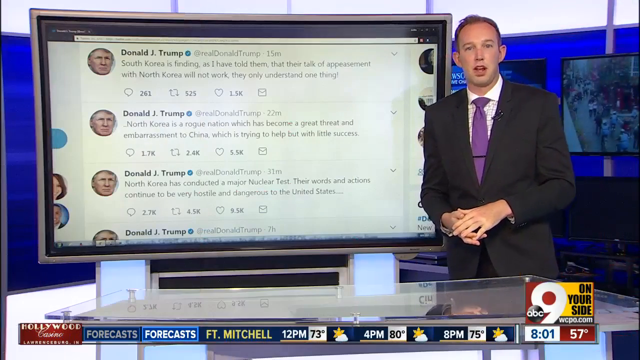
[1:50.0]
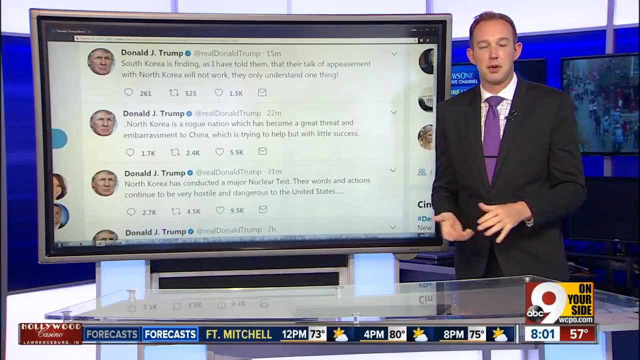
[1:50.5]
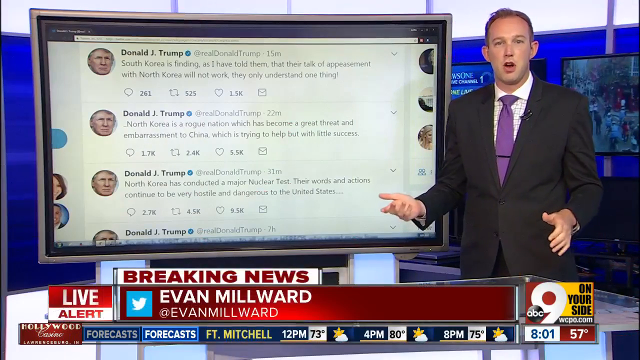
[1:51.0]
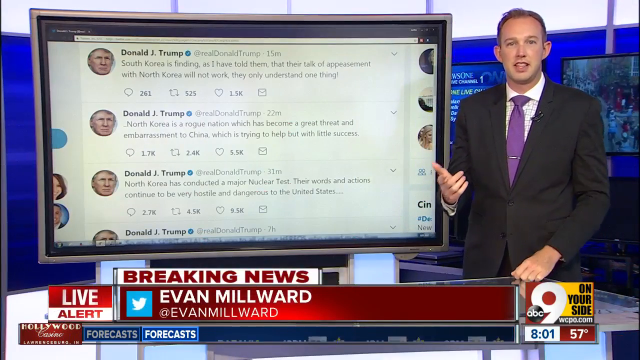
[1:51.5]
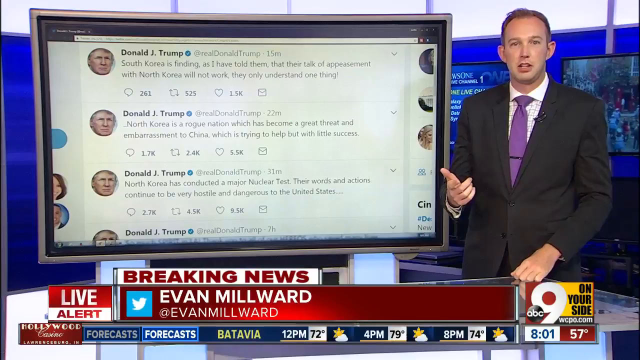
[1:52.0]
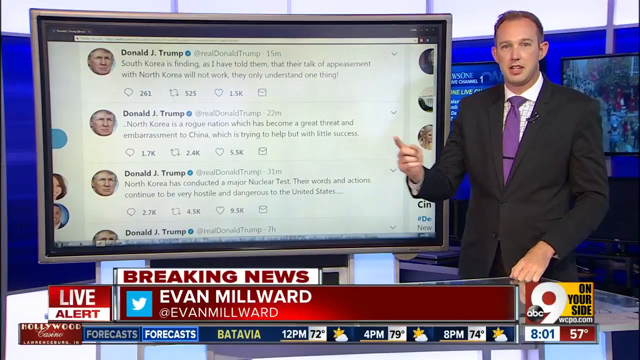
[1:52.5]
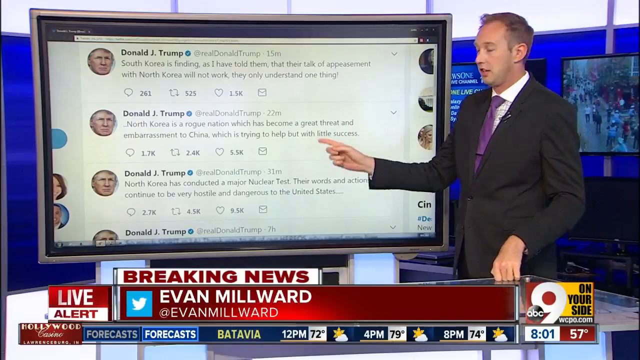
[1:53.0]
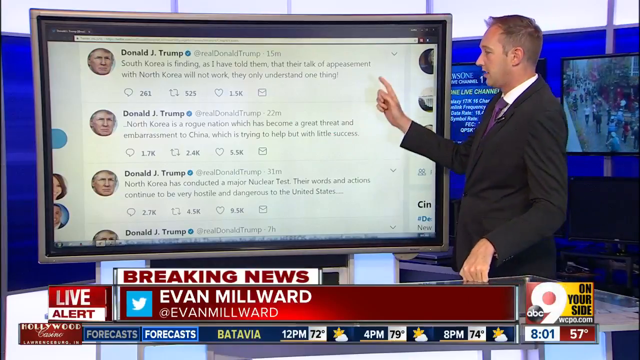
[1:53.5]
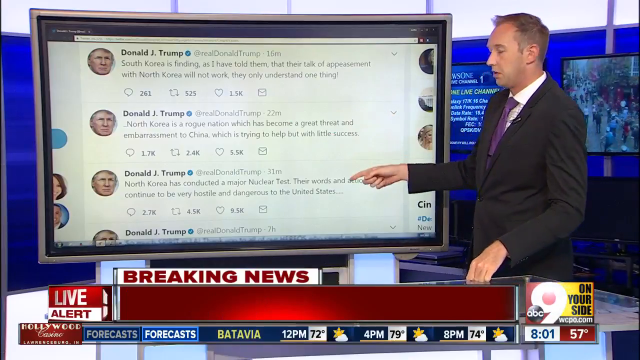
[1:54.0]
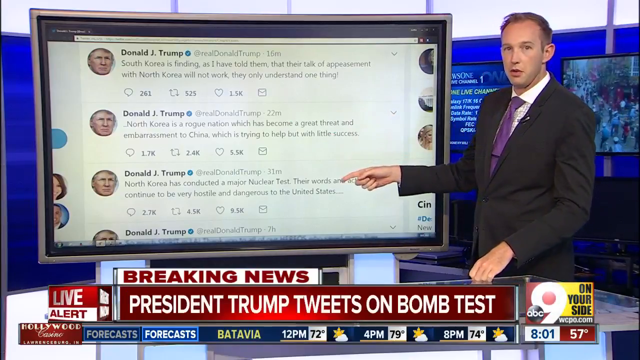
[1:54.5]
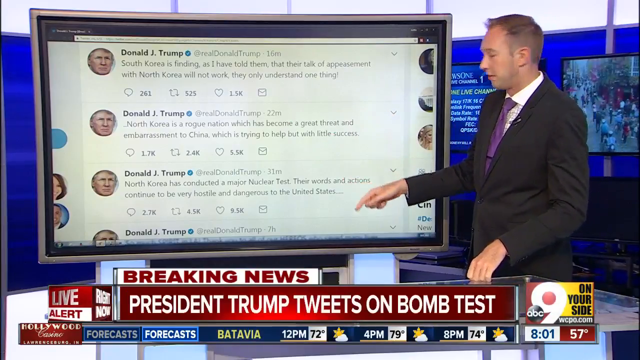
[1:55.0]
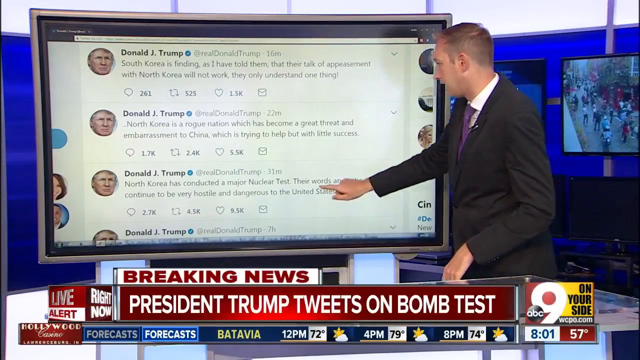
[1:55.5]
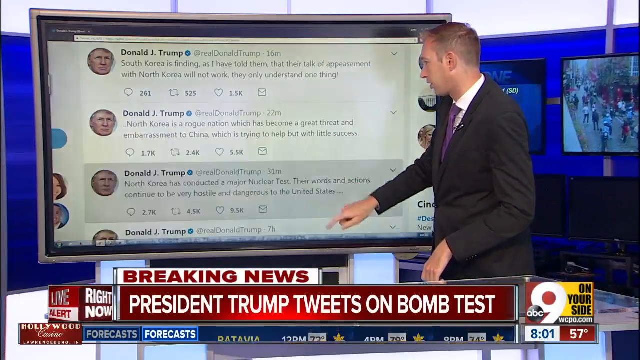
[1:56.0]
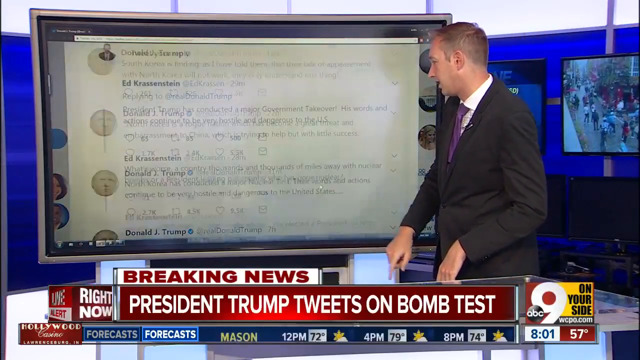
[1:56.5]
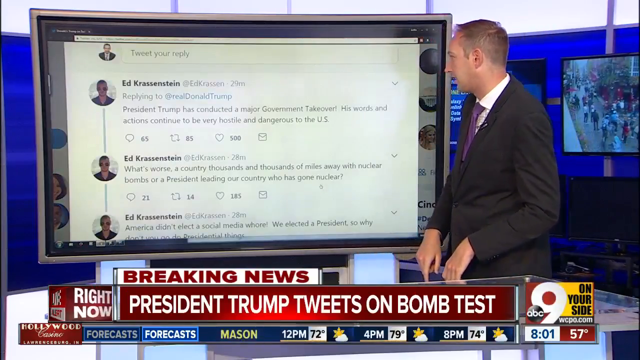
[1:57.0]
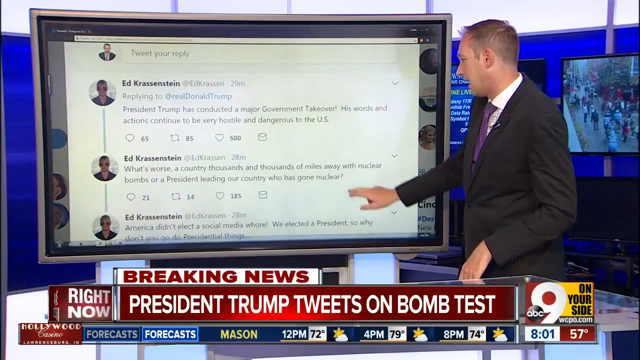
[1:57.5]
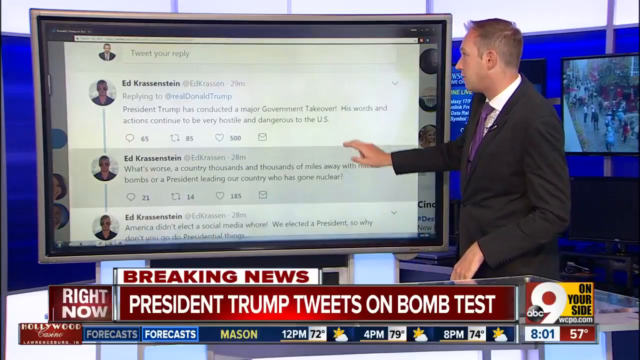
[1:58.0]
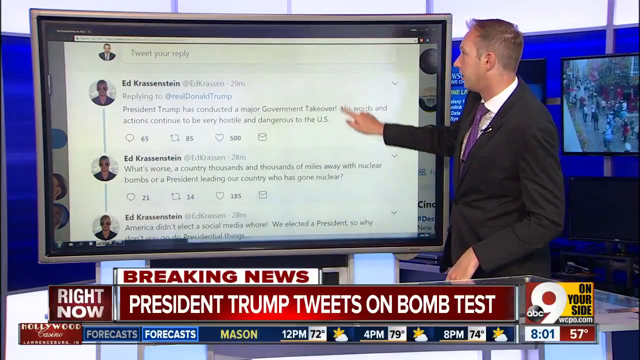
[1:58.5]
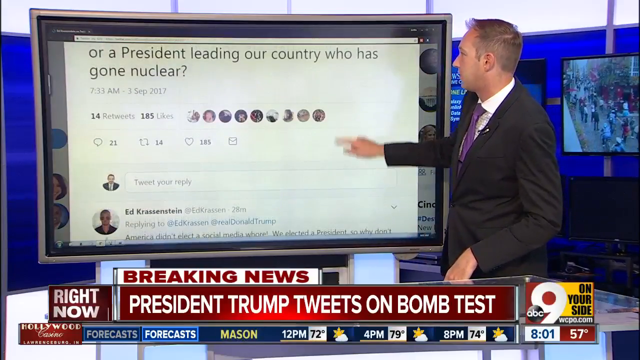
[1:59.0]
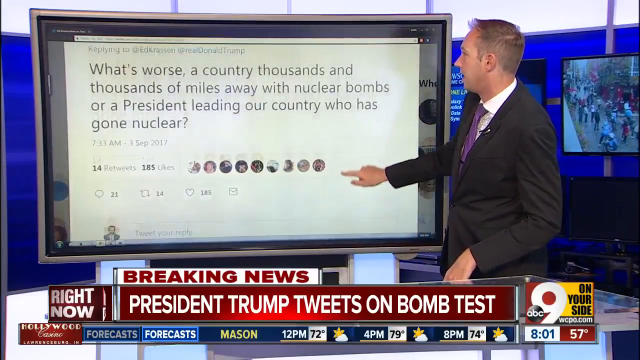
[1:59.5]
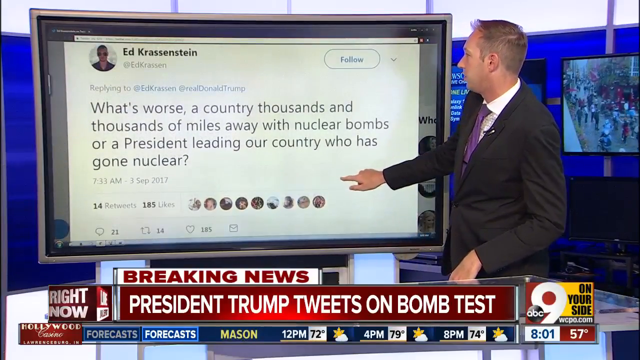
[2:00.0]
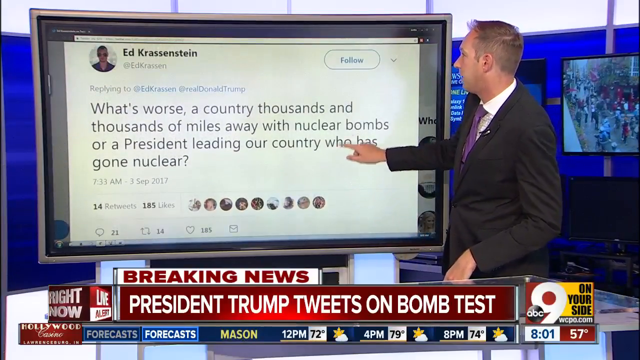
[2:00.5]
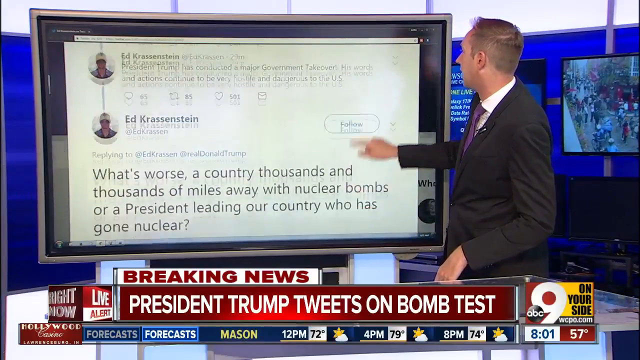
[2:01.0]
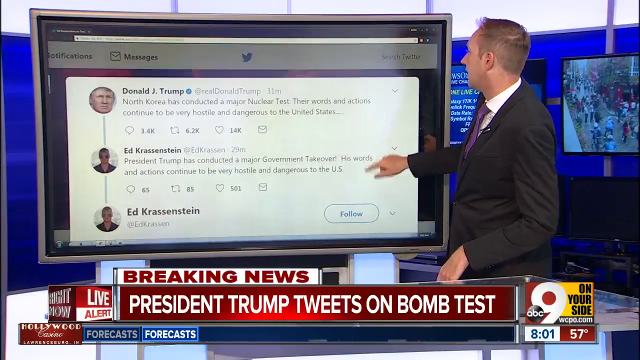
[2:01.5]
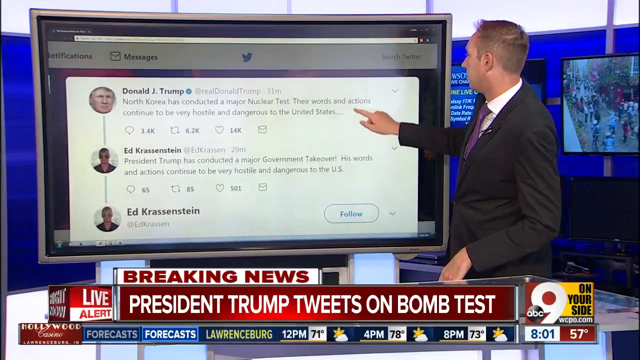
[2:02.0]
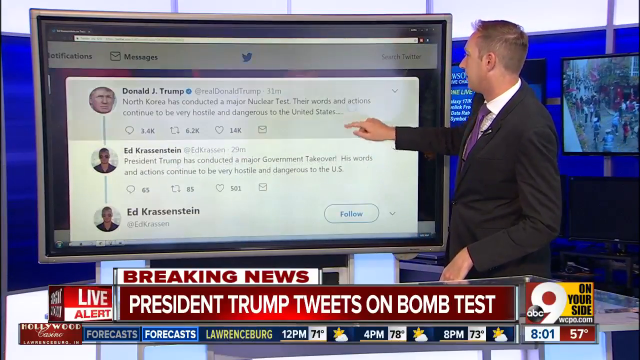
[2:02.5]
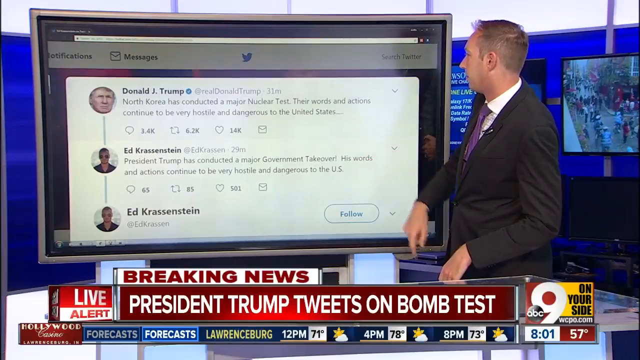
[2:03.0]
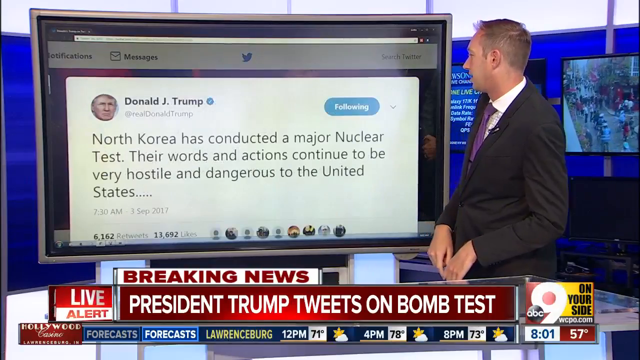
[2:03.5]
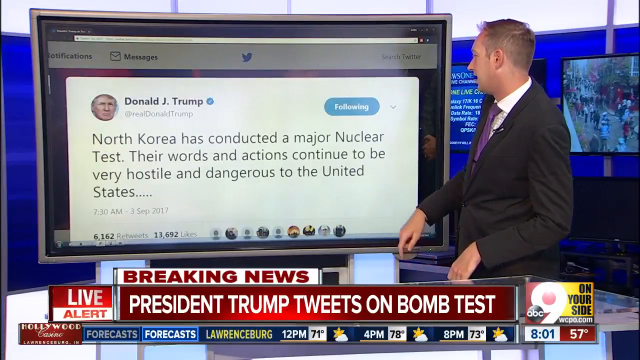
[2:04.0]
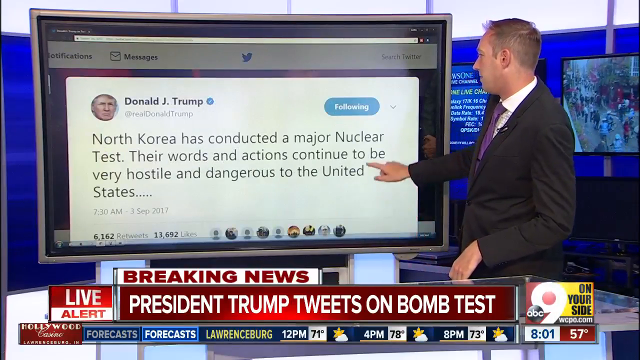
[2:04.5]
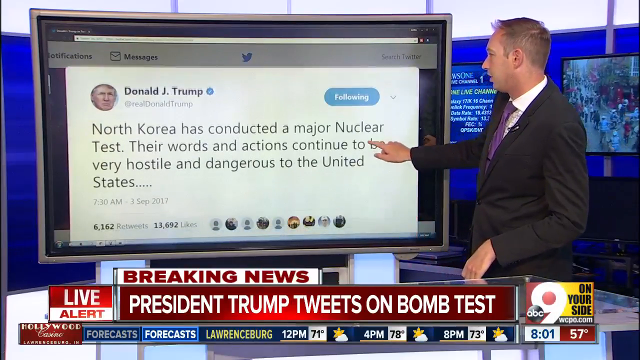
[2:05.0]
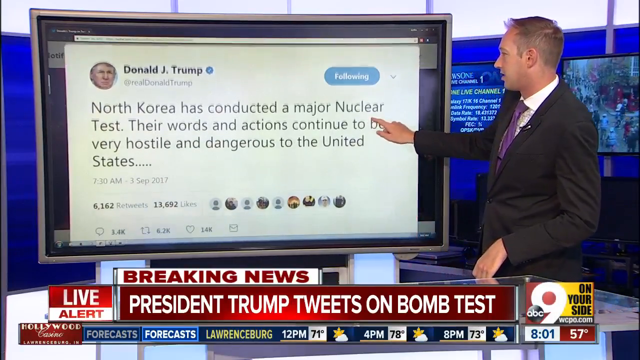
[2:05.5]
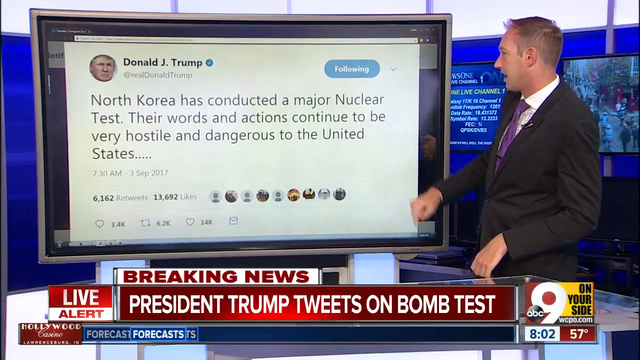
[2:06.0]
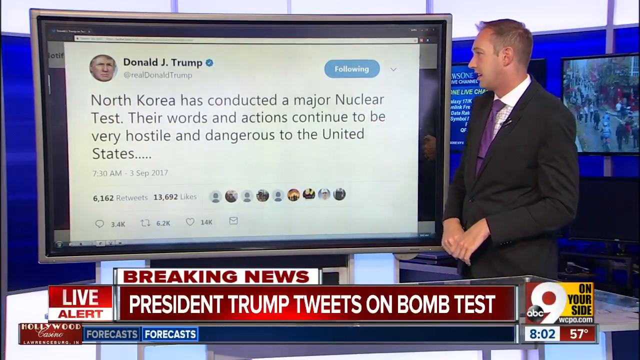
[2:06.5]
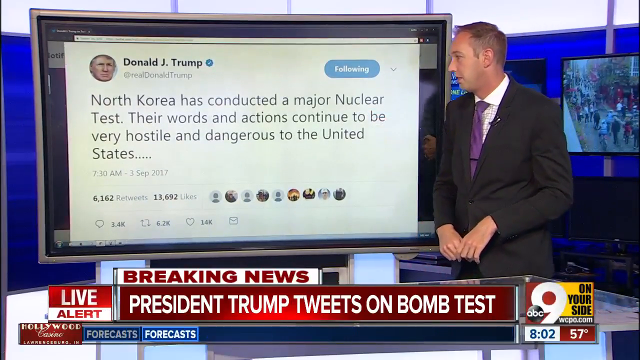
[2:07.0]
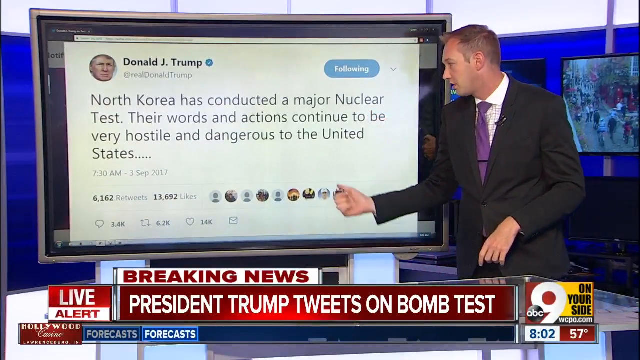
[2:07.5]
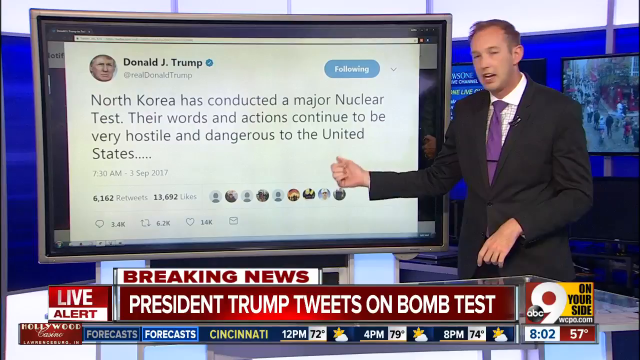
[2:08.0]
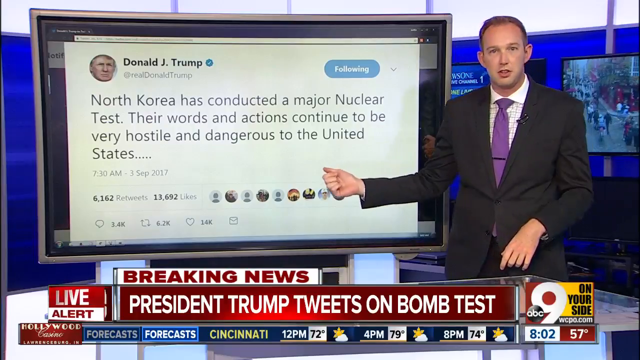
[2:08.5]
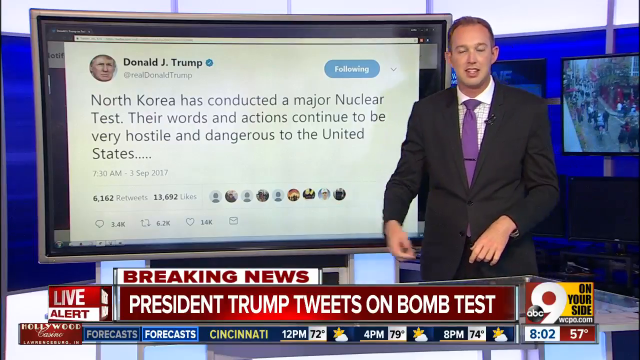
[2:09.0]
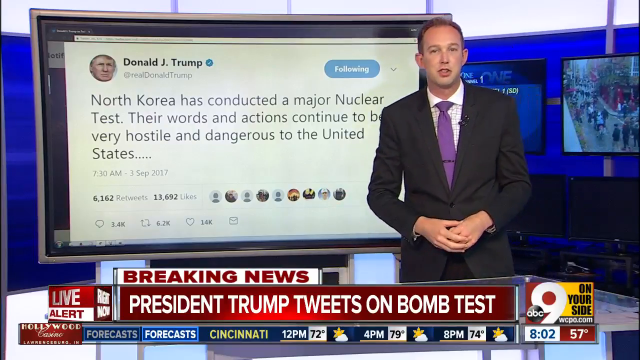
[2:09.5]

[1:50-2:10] The TV screen behind the man shows a series of tweets from Donald Trump; there appear to be four, with the first three visible and the fourth clipped off the bottom of the screen. The first one reads "South Korea is finding, as I have told them, that their talk of appeasement with North Korea will not work. They only understand one thing!" The man, on the right side of the screen, rests his left hand on his knuckles on the corner of the glass table in front of him and points at the camera with his right hand at about waist height. He then turns to his right and points at the screen with his right hand. His left hand slides off the side of the table and hangs at his side, kind of in front of his waist. With his right hand he touches the screen and swipes down to scroll upward, showing a tweet from Ed Kransenstein.